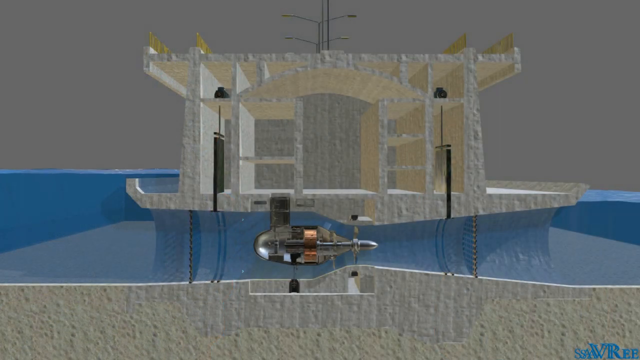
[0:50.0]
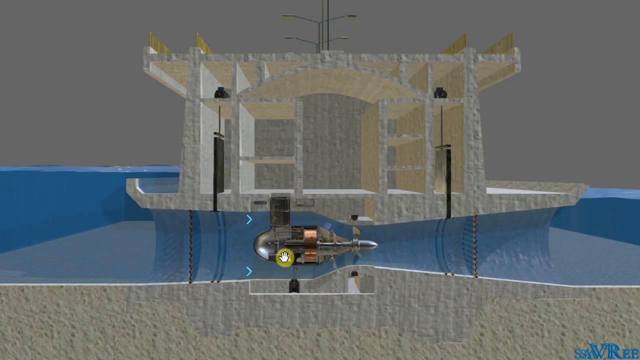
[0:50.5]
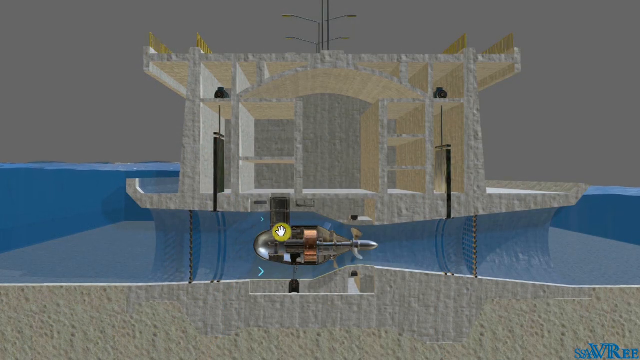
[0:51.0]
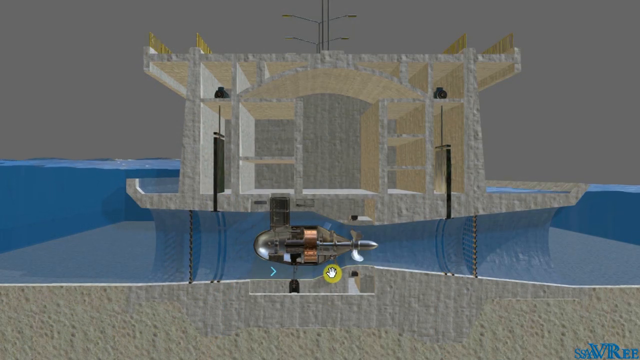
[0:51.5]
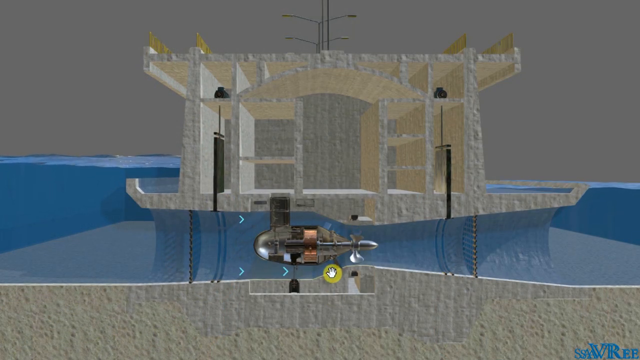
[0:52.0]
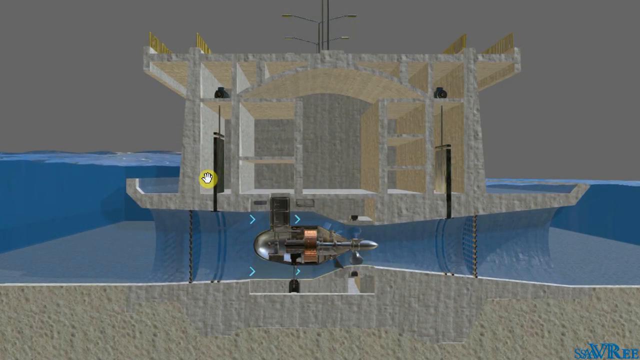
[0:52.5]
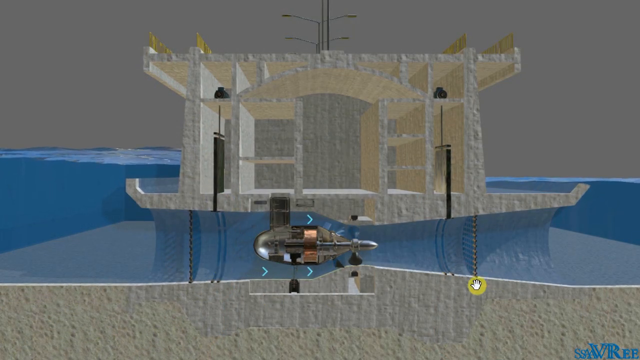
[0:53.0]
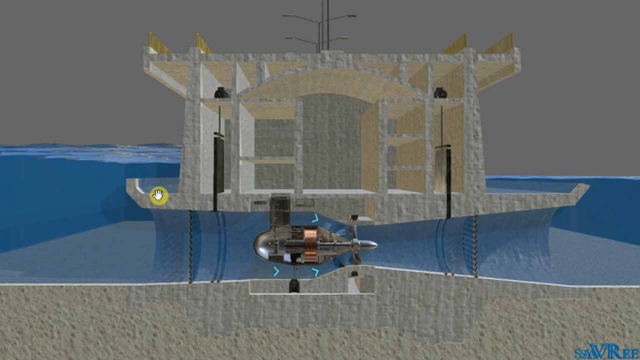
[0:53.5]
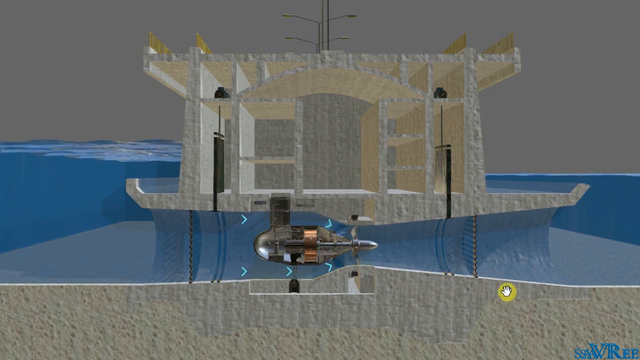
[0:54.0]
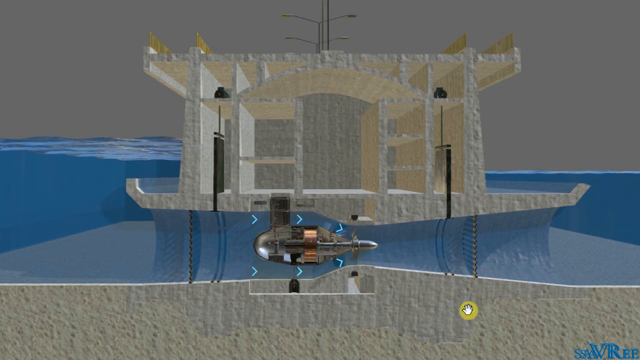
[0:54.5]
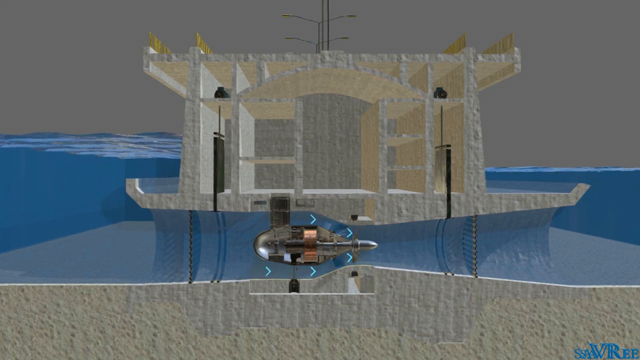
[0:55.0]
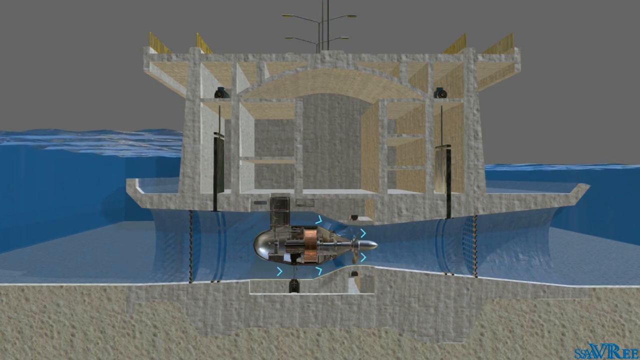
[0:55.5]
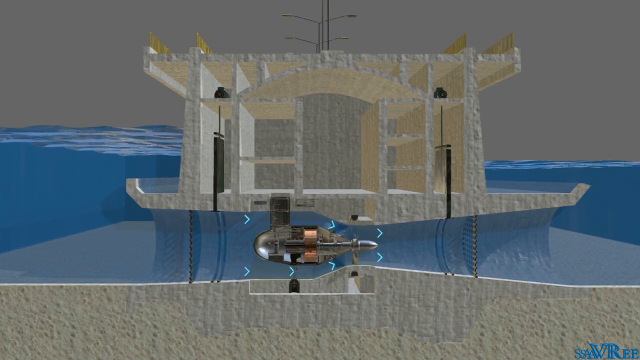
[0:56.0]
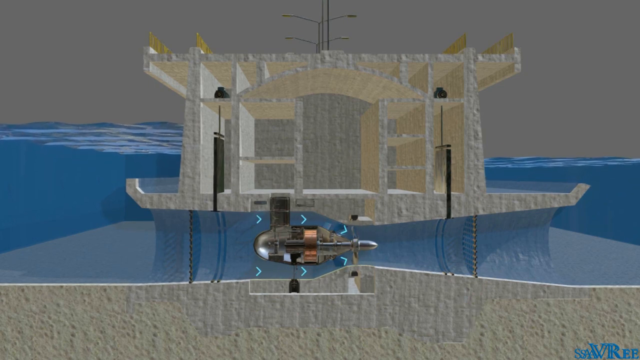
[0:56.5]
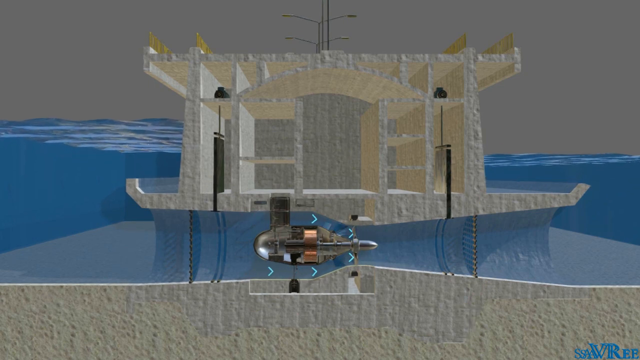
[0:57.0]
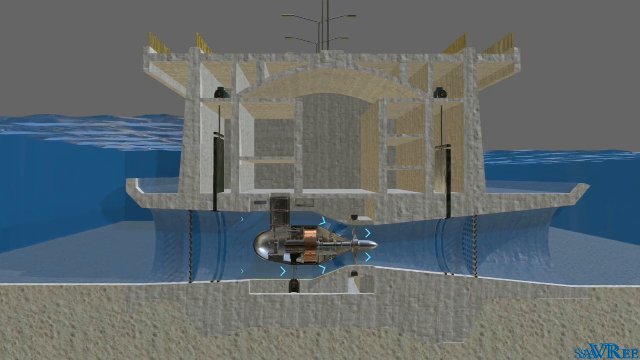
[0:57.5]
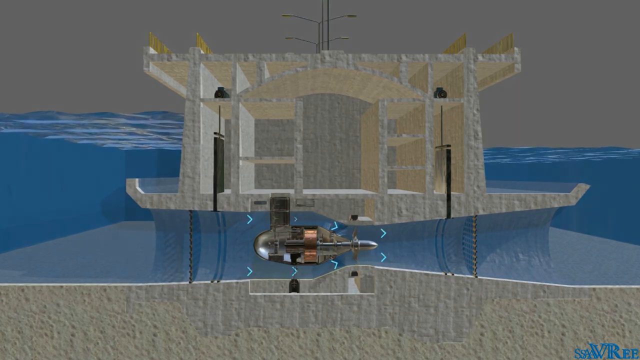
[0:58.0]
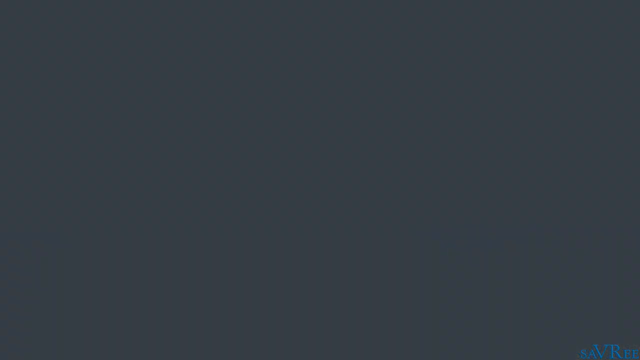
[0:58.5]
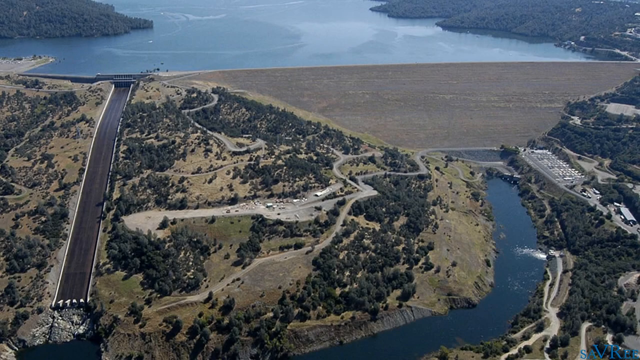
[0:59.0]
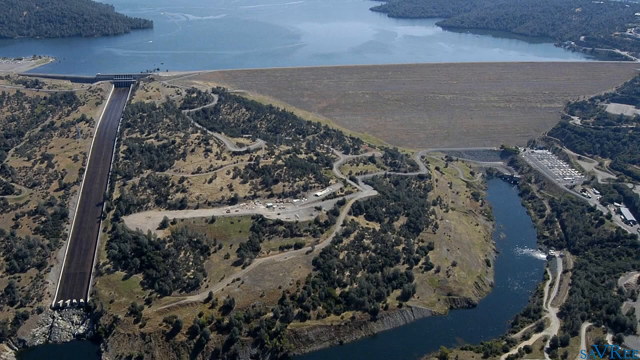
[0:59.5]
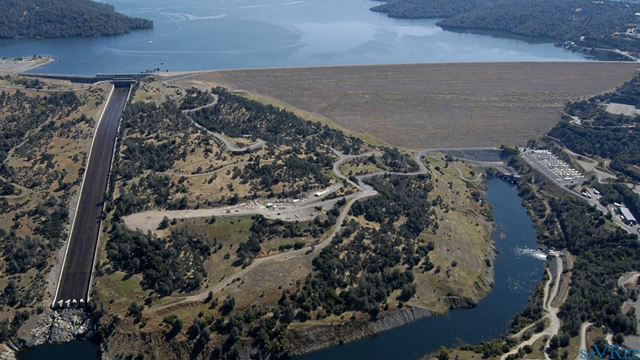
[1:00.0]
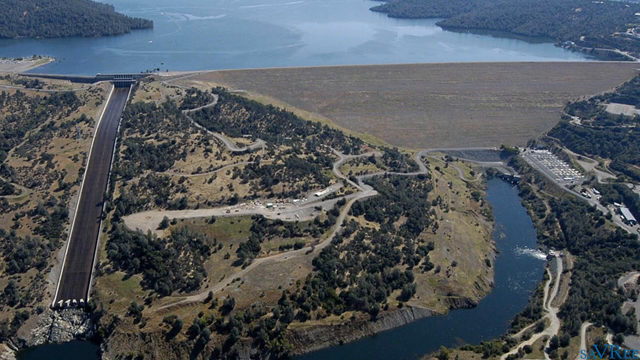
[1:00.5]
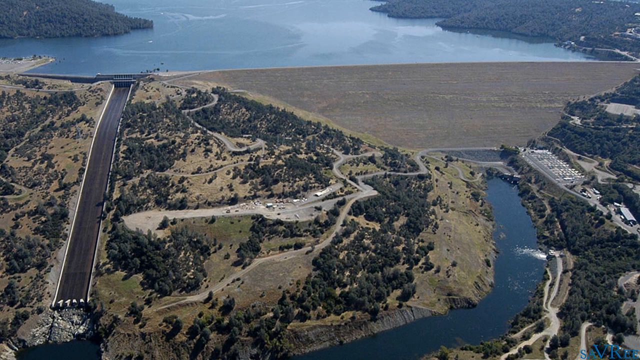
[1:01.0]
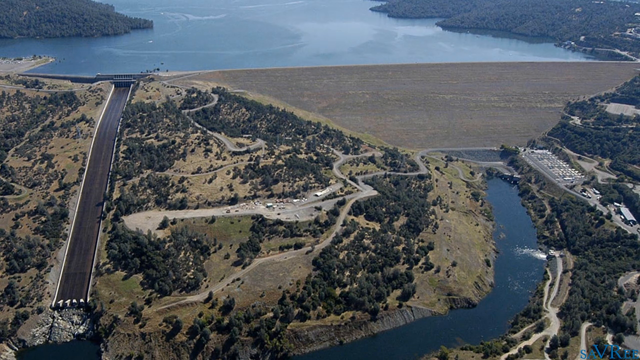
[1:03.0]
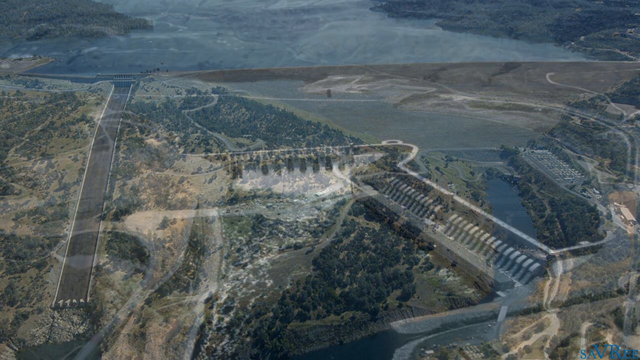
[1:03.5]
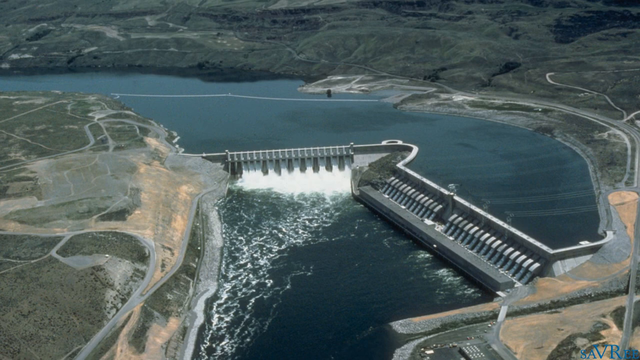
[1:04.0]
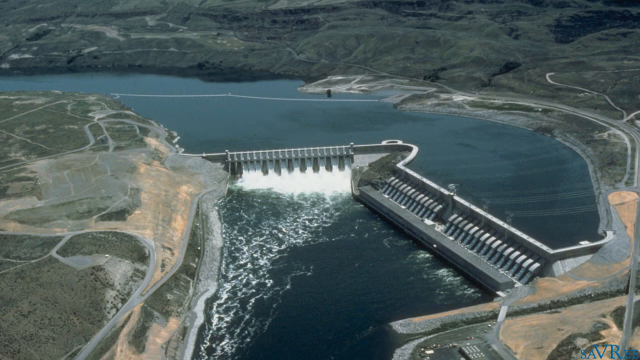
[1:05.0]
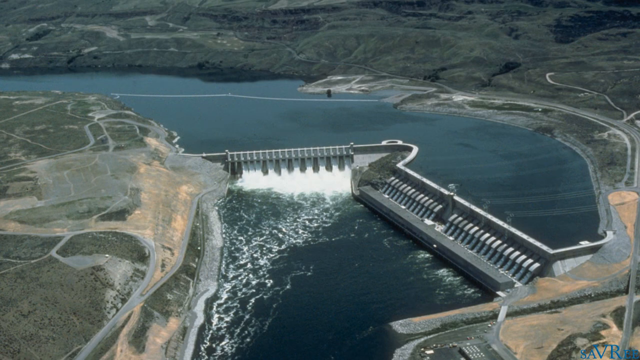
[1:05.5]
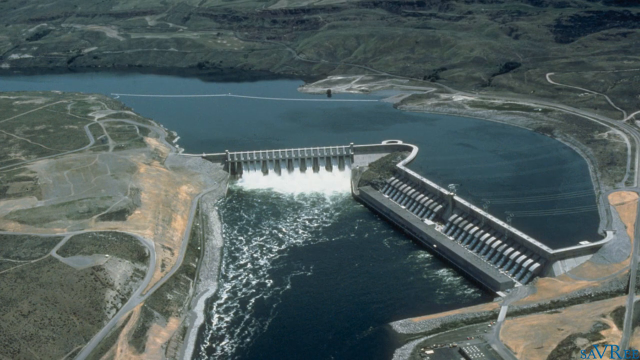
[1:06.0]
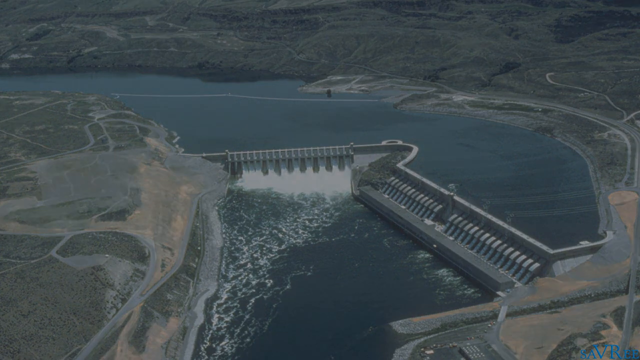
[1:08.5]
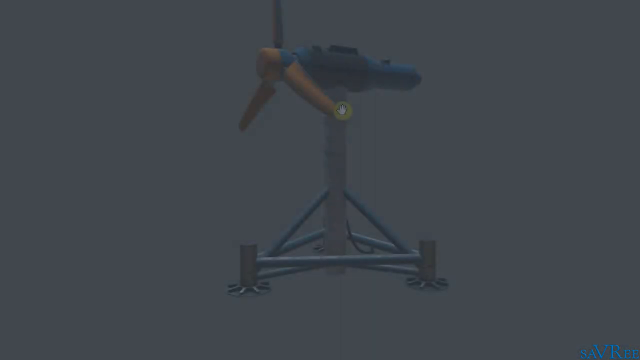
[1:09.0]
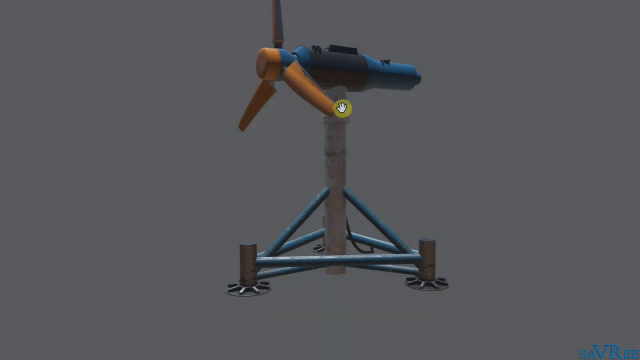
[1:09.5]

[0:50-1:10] Some sort of structure that seems to be made of concrete, potentially, is shown next to water, along with some sort of device used to move water through a small waterway underneath the structure. The image transitions to a kind of farm crop field next to some sort of dam or waterway, and then to a picture of an actual dam with water moving through it, possibly a hydroelectric dam or some other modern dam design. No specific people or animals are depicted, and the scene ends with water flowing through the dam.